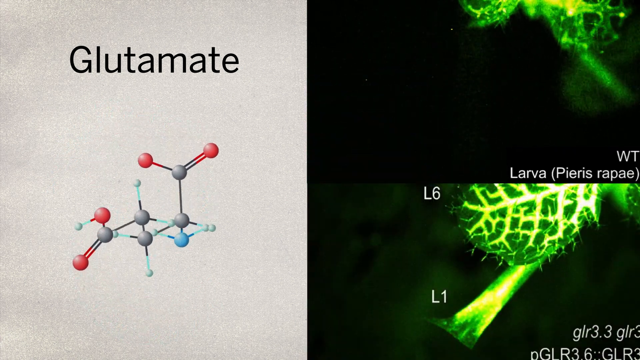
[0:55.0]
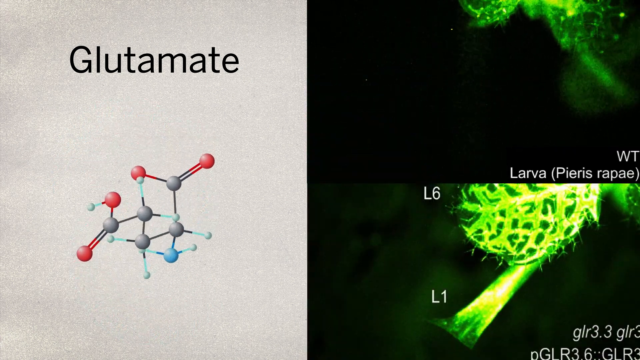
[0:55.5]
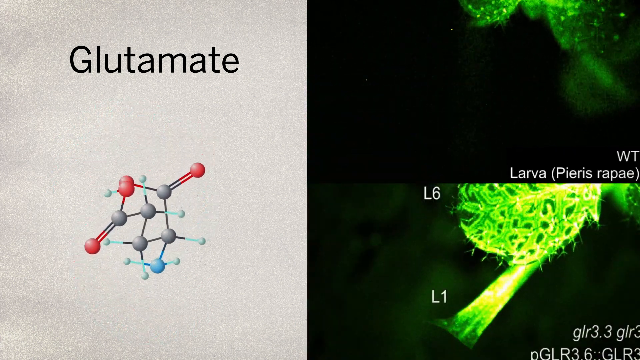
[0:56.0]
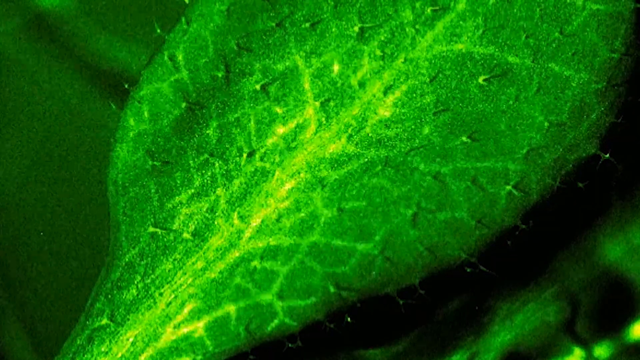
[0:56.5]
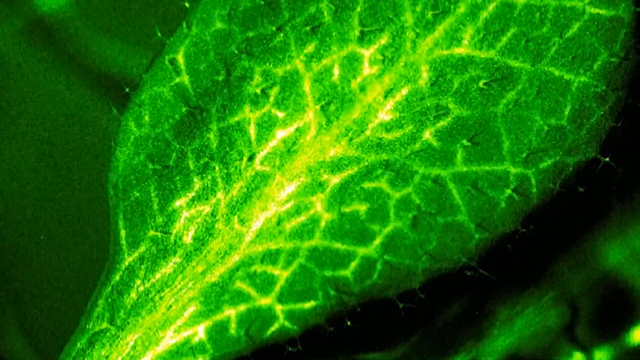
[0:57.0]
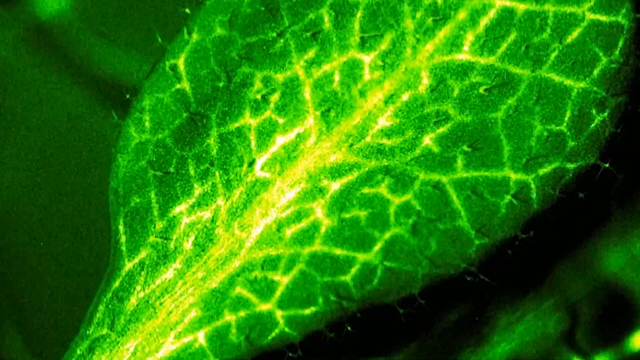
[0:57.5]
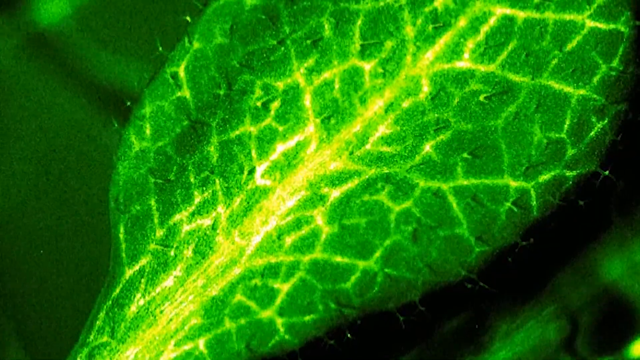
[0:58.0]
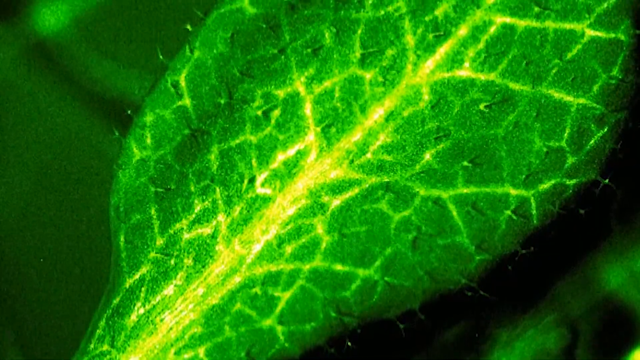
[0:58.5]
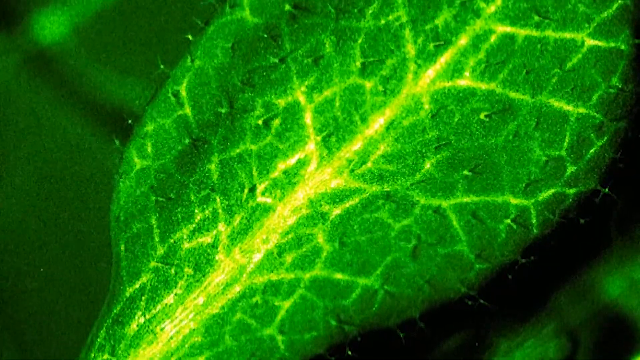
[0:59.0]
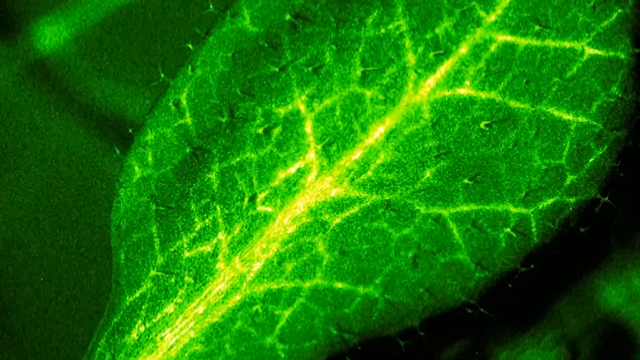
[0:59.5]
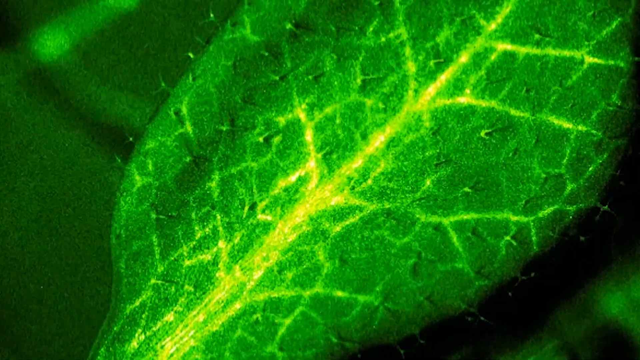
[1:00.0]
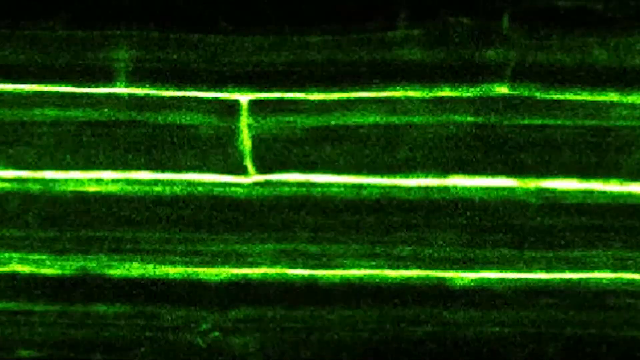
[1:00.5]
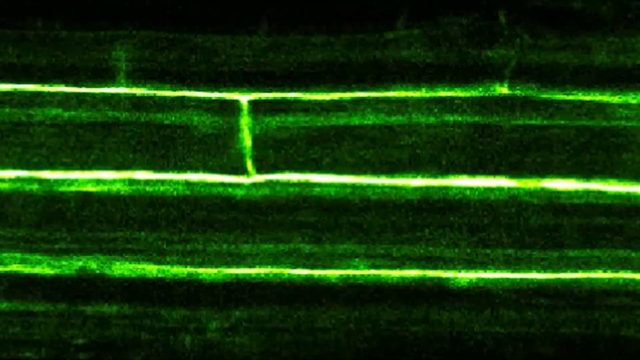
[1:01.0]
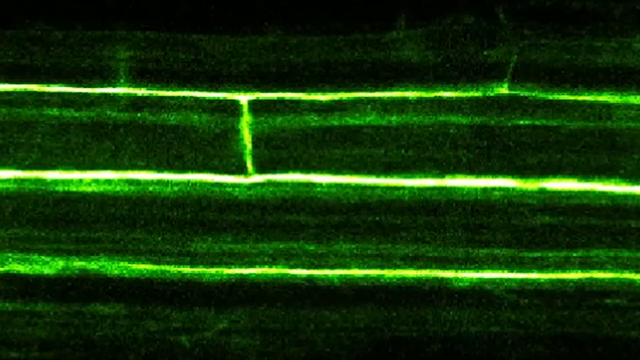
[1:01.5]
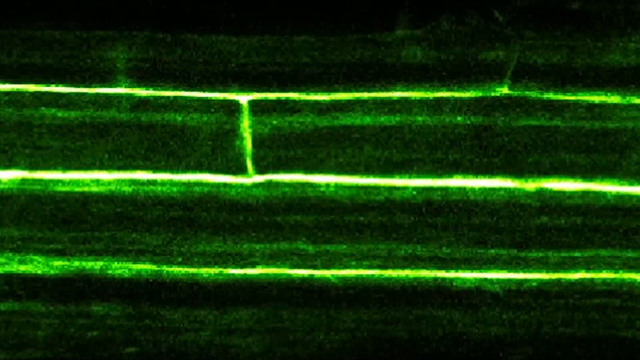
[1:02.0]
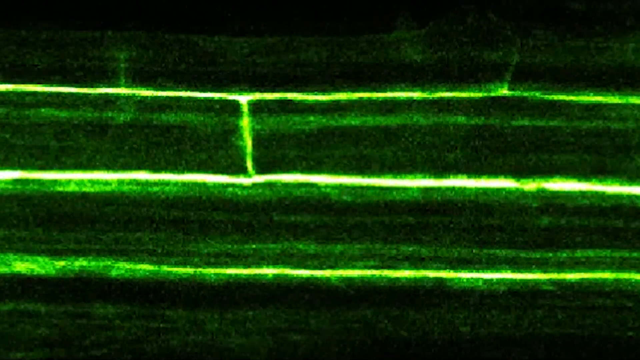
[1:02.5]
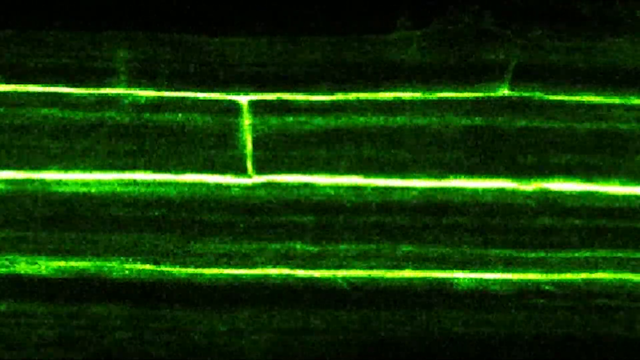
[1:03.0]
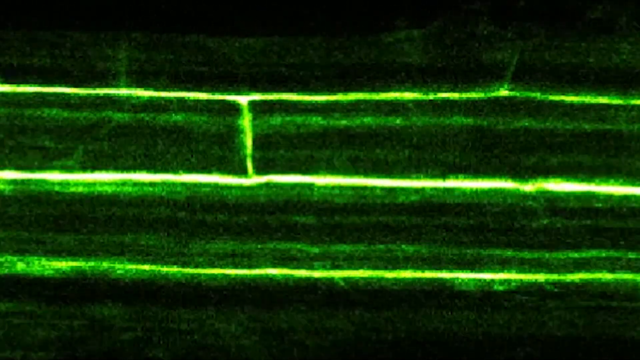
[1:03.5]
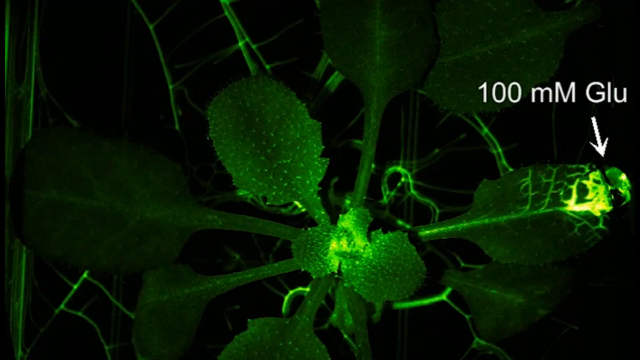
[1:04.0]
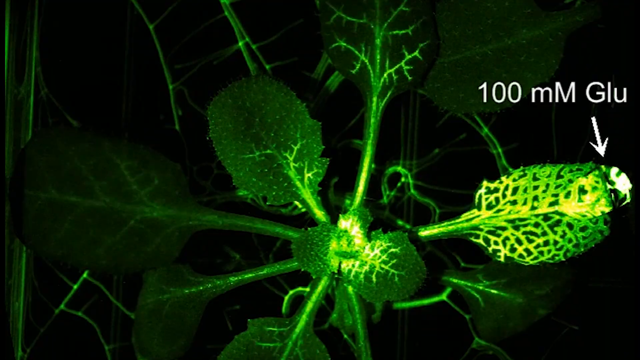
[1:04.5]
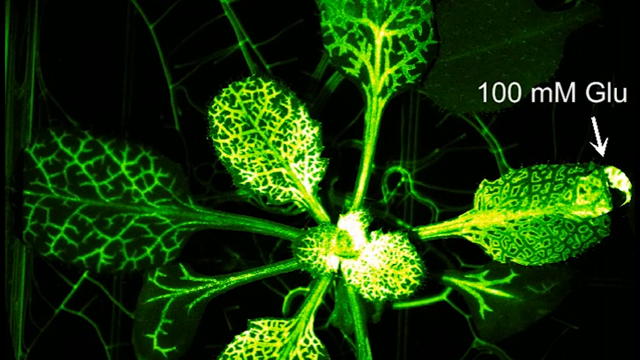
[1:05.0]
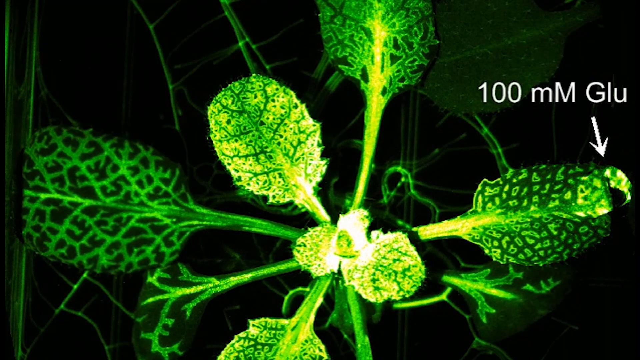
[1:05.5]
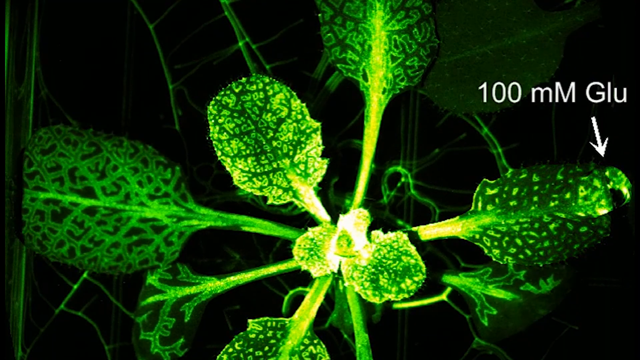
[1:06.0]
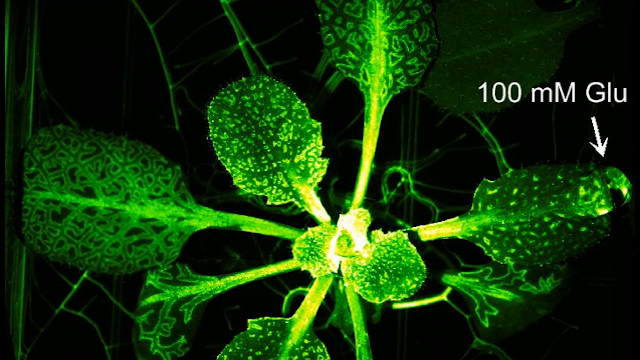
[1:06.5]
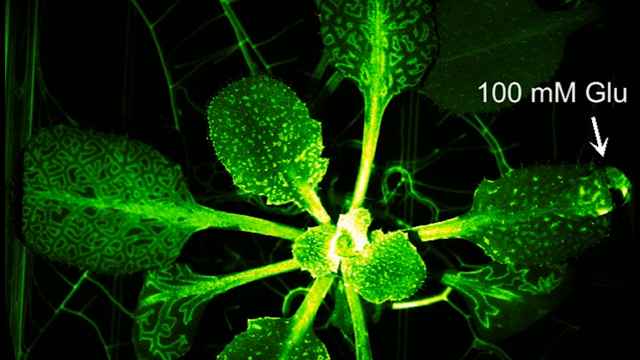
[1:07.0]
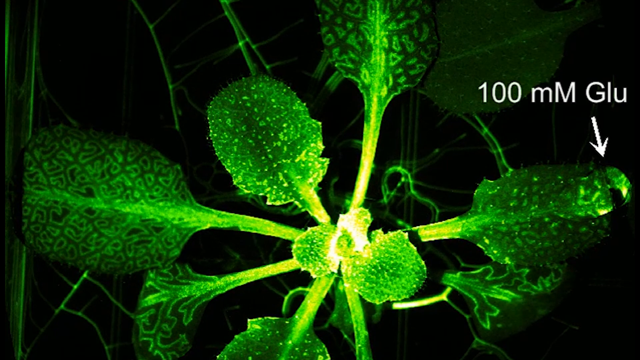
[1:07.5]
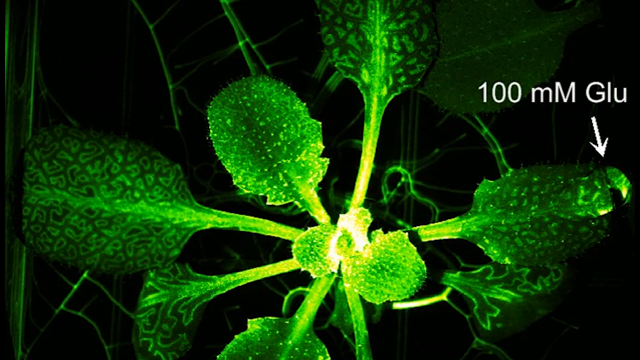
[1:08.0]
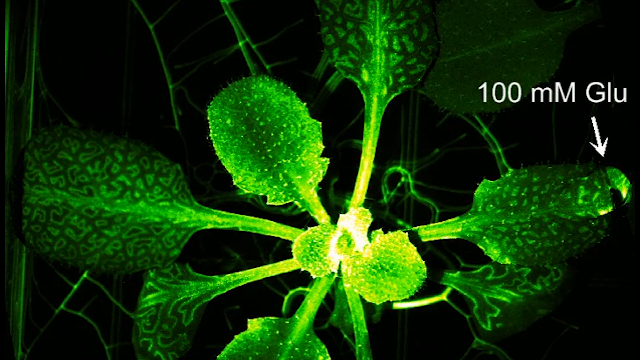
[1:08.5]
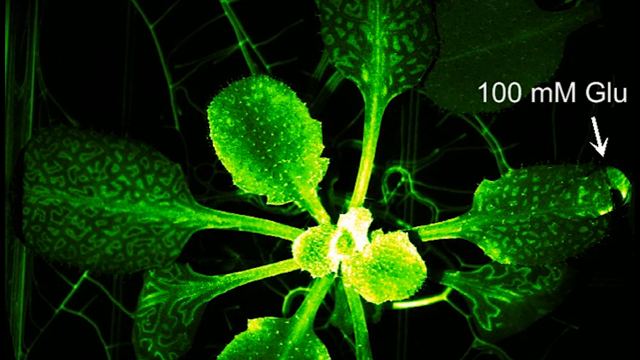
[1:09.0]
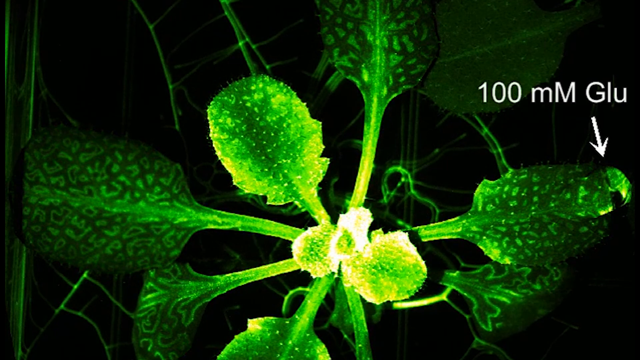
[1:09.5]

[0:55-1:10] The video alternates between clips of plant parts under high magnification and illumination and diagrams of a glutamate molecule. The setting is apparently a laboratory and does not change. The sequence apparently aims to show that plants have their own kind of nervous system, with glutamate at its core.